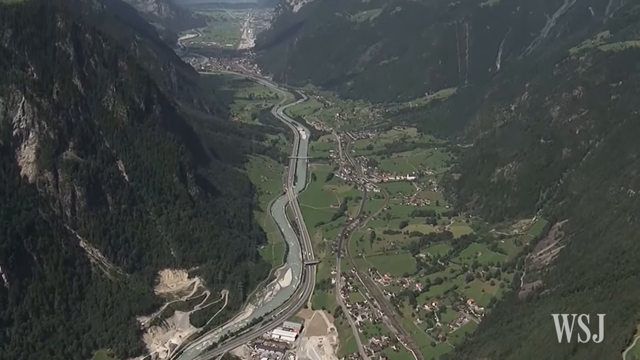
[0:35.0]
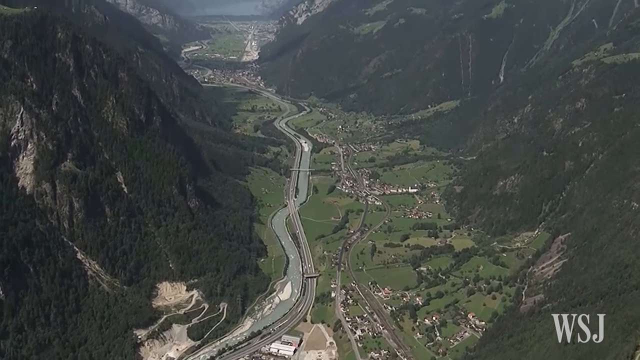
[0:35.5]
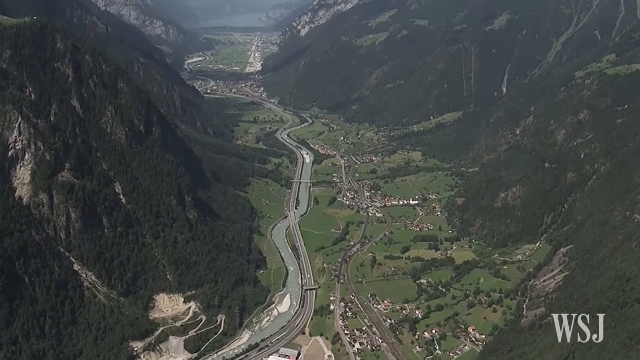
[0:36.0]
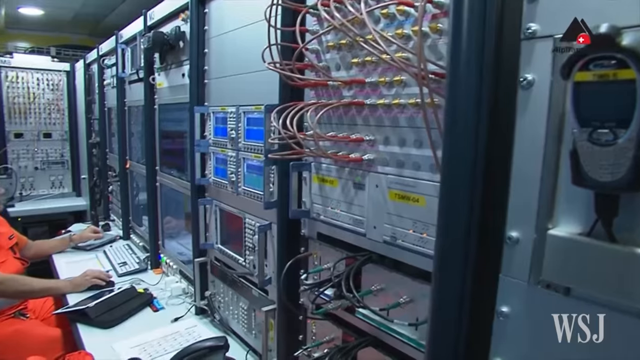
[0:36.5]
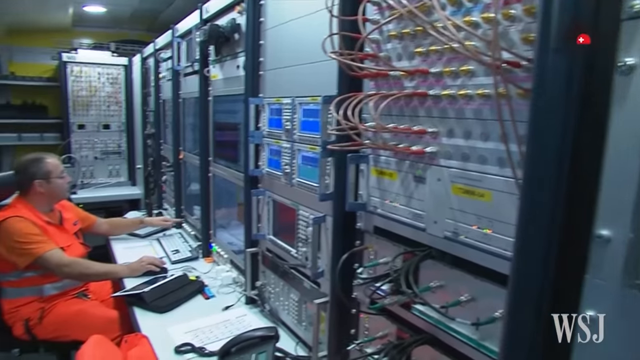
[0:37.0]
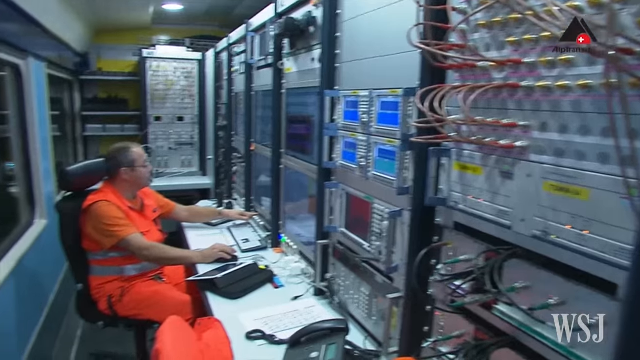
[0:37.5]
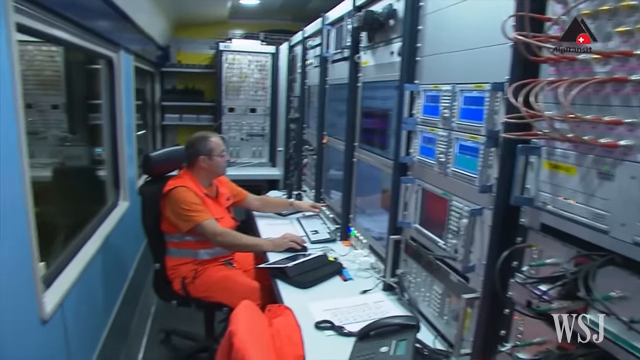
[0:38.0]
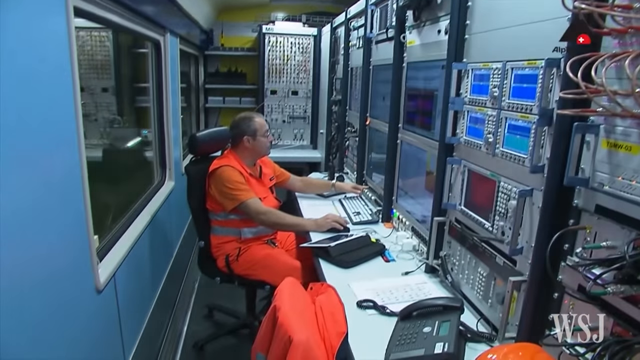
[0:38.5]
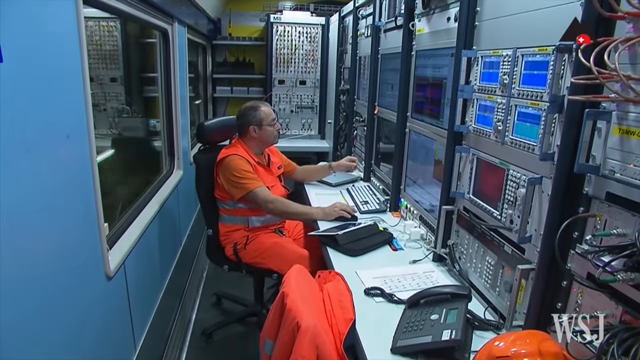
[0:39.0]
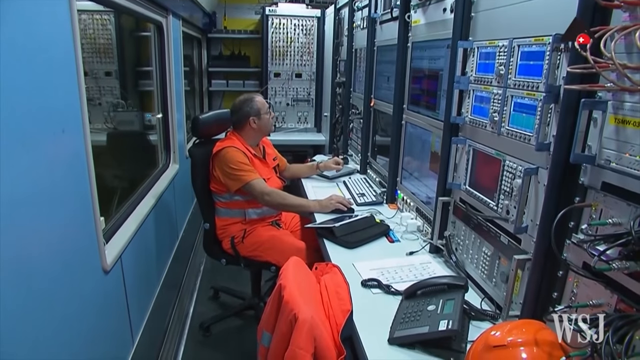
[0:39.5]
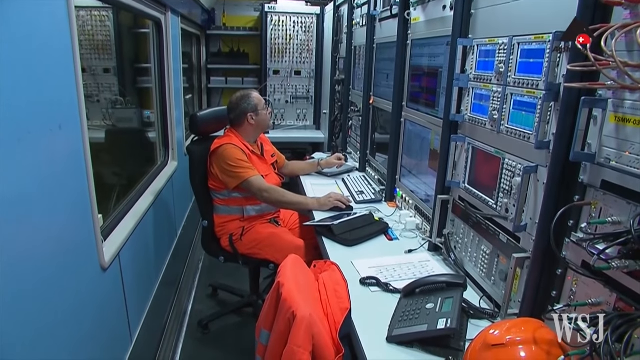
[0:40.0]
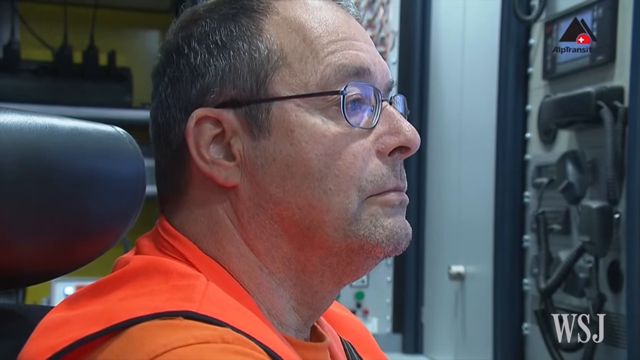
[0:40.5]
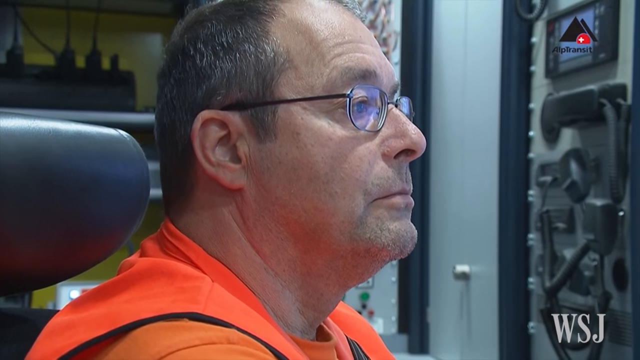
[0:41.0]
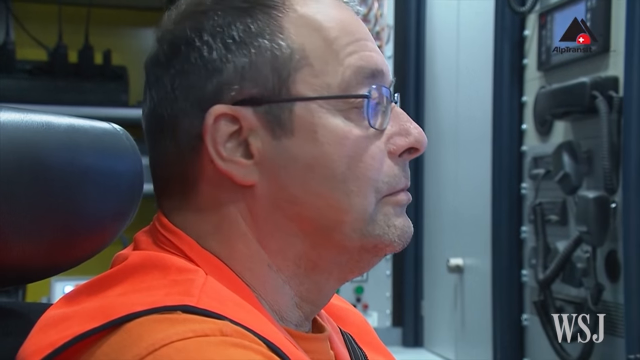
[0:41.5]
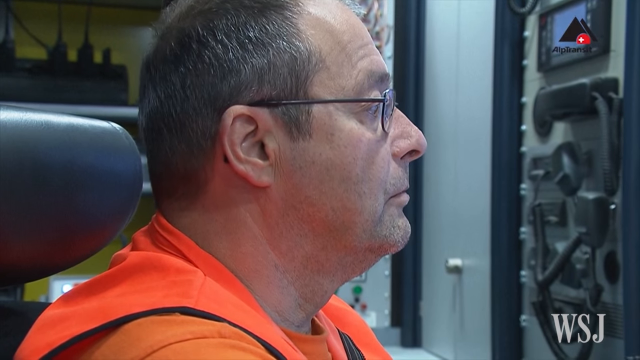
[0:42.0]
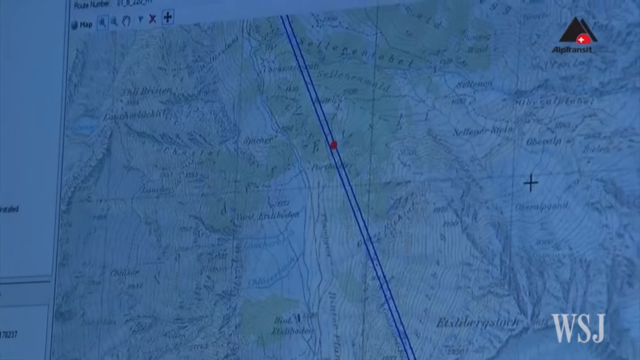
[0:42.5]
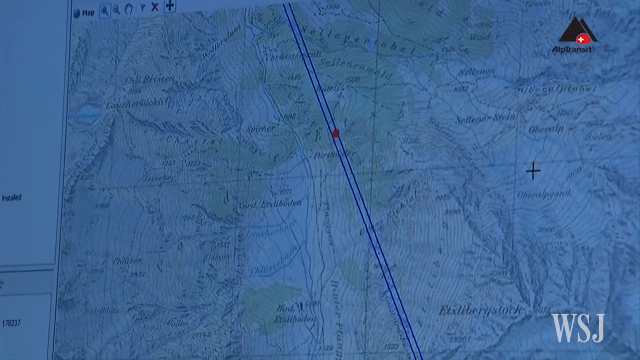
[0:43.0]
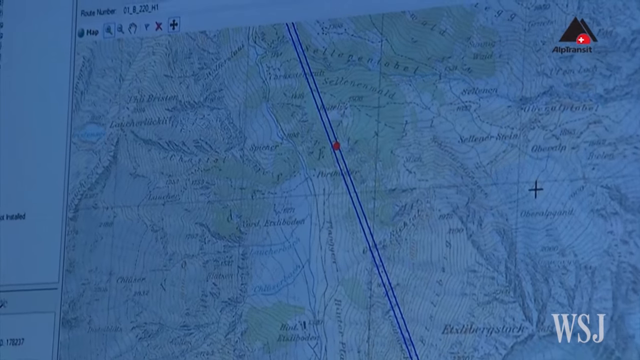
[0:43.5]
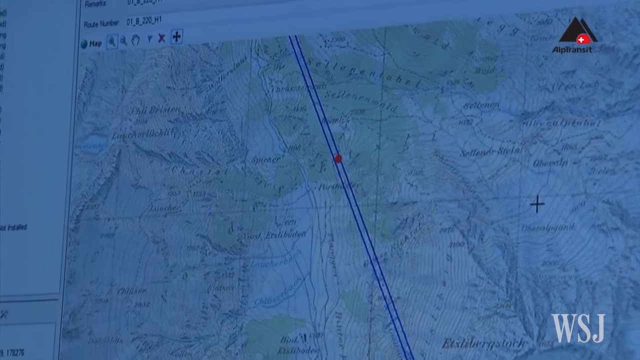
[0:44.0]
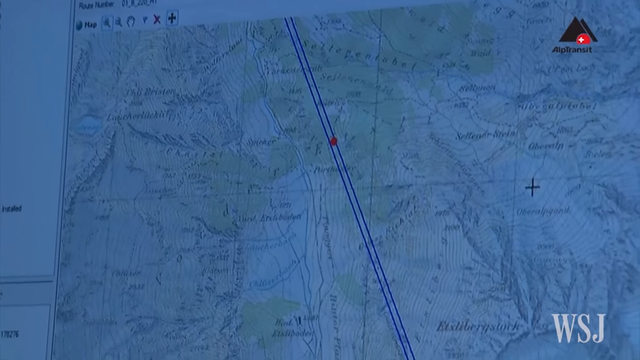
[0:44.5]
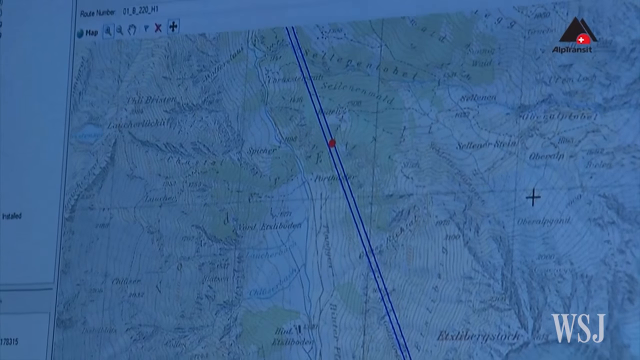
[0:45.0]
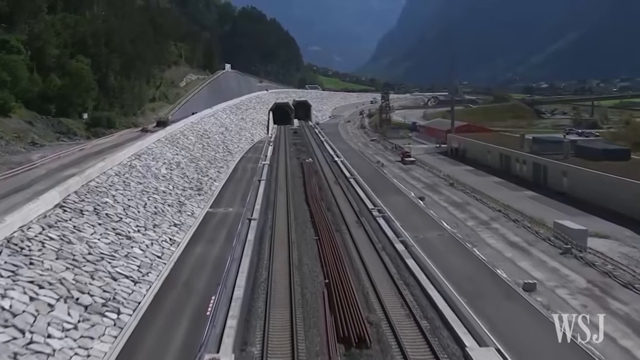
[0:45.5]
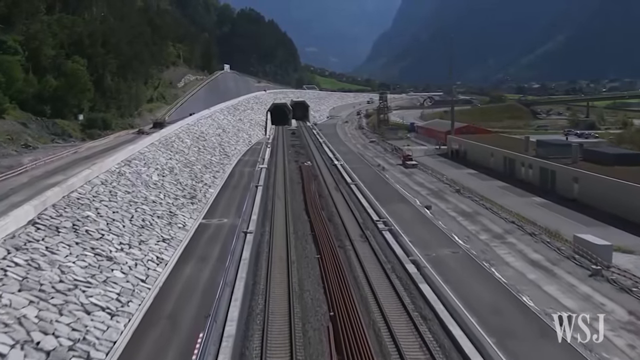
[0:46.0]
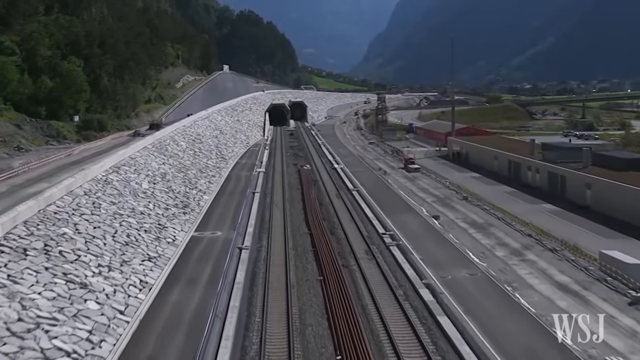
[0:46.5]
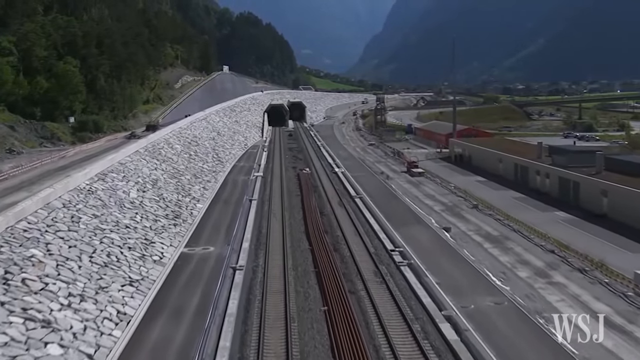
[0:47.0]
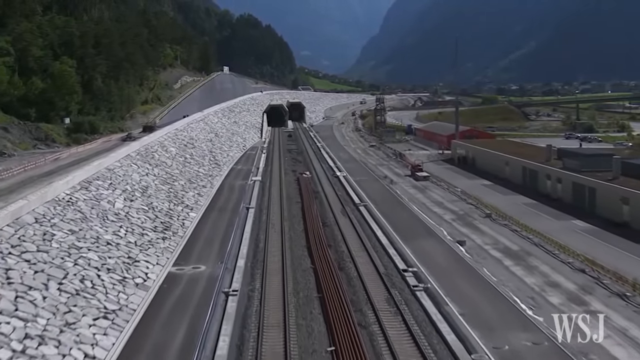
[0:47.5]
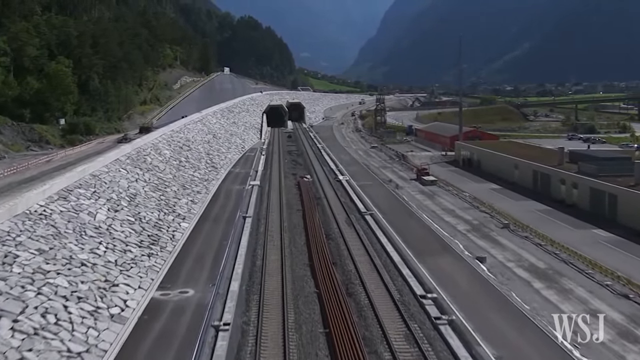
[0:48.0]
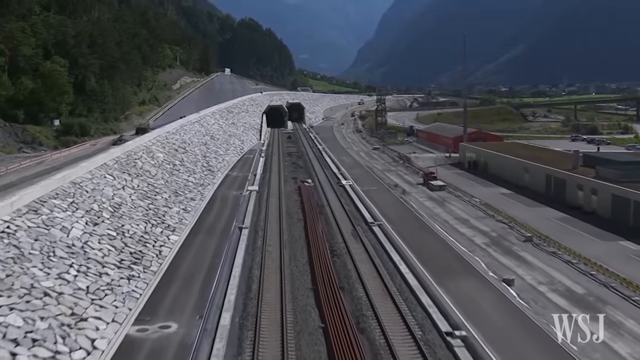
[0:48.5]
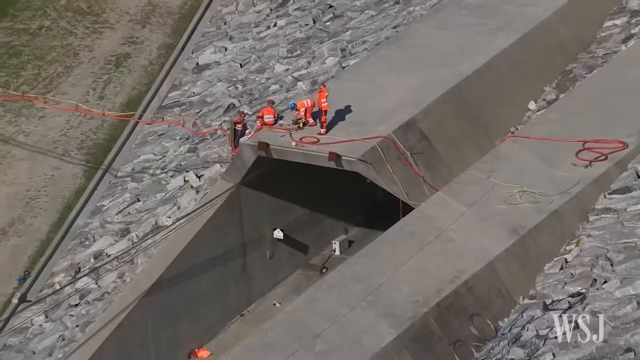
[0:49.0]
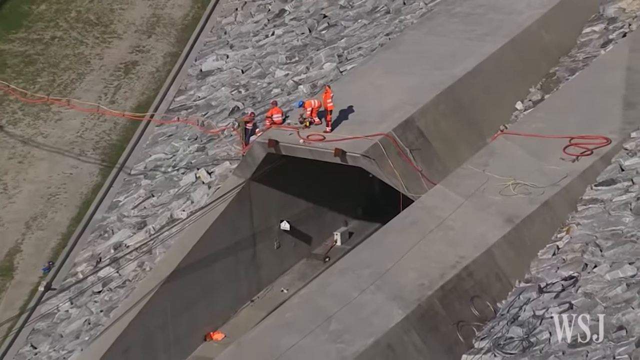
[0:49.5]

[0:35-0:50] The panoramic view of the area down below gives way to an office area with a man who seems to be in a train station, apparently controlling the rails. A train is visible behind him in the office at the start. The narrow little room has many buttons. On his computer is a map with a blue dot and a moving line that he follows. The tracks appear, along with workers who look like they might be working on the tracks, and the train. The train tunnel is shown, and workers seem to be working on top of a tunnel, as if maintaining something.